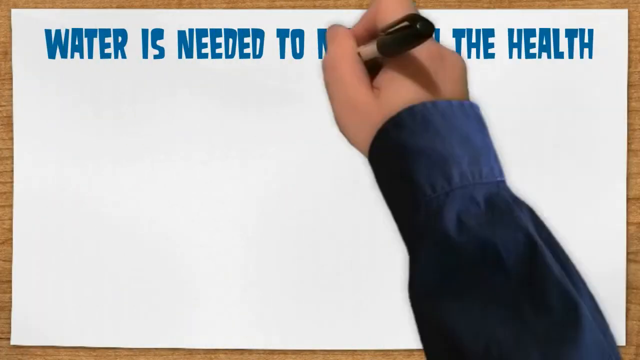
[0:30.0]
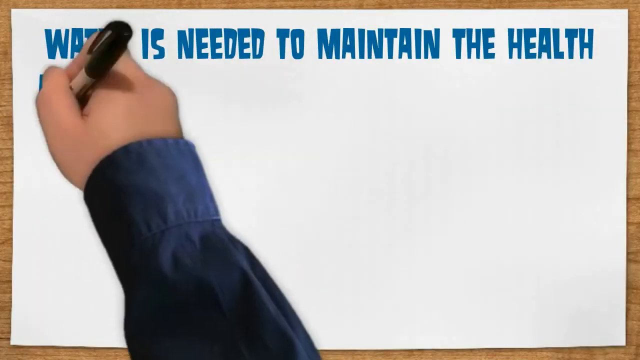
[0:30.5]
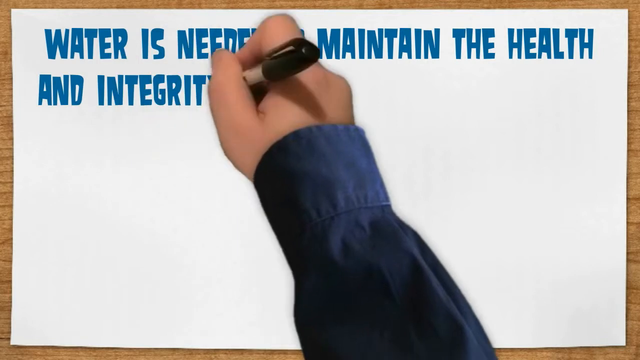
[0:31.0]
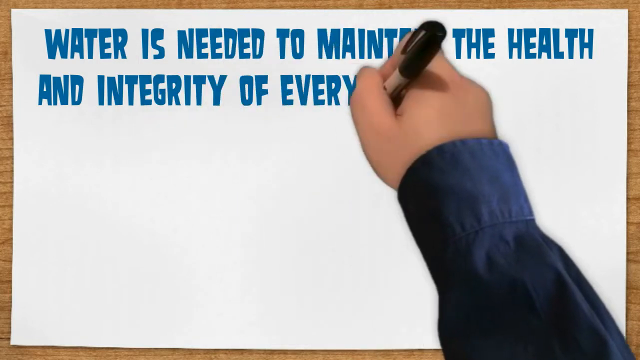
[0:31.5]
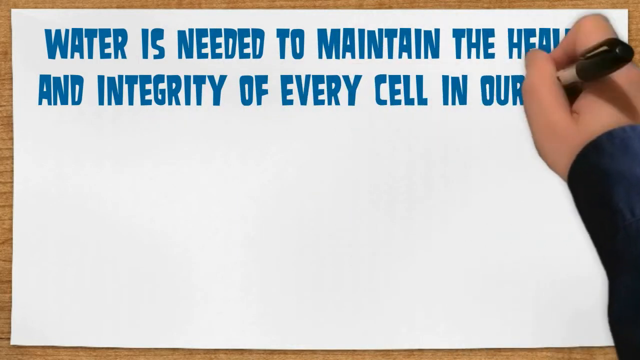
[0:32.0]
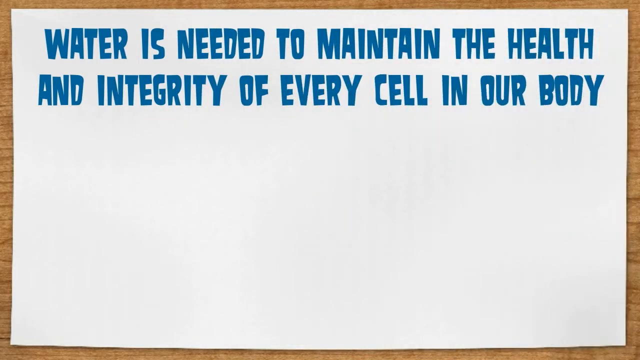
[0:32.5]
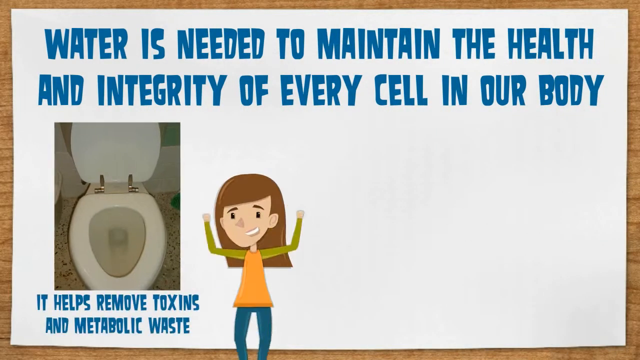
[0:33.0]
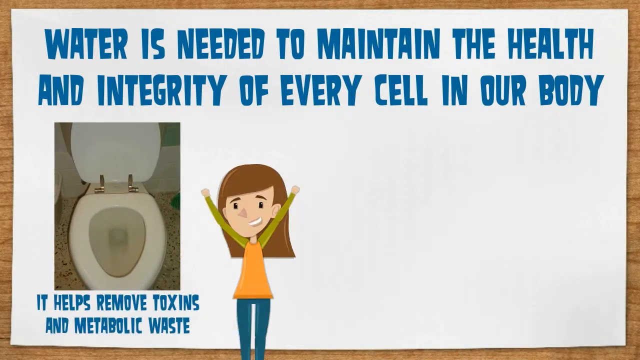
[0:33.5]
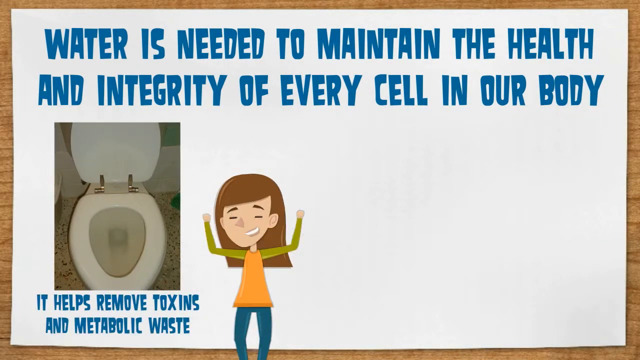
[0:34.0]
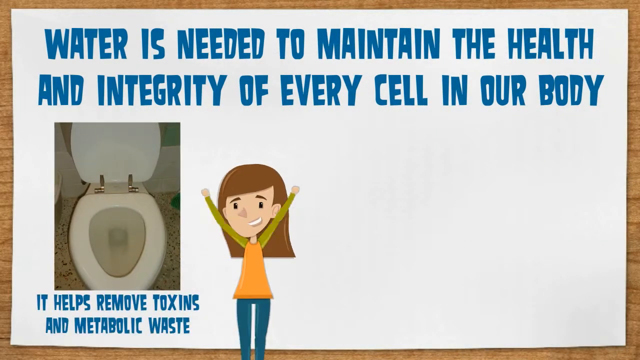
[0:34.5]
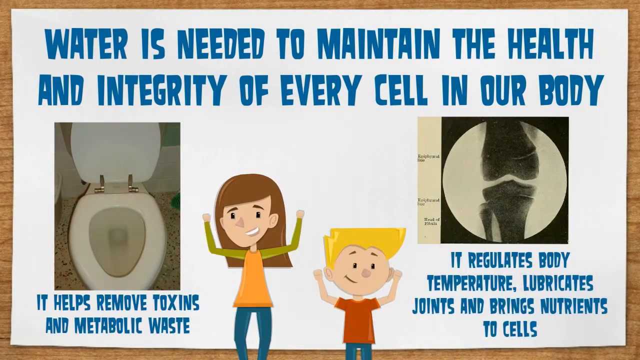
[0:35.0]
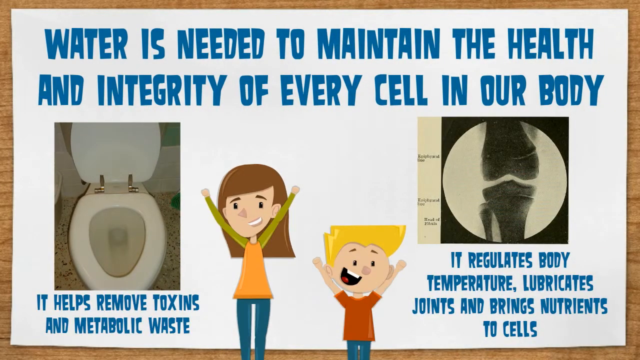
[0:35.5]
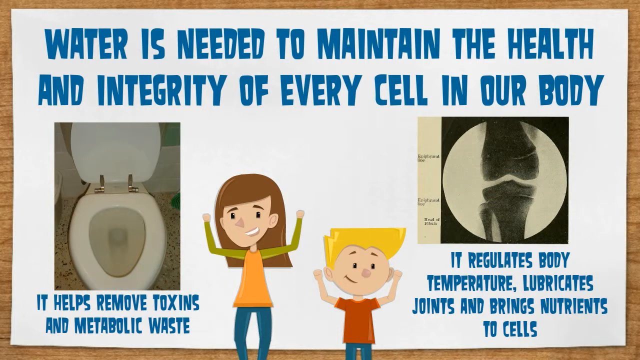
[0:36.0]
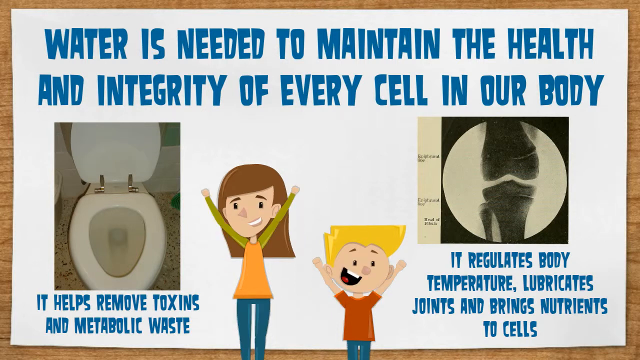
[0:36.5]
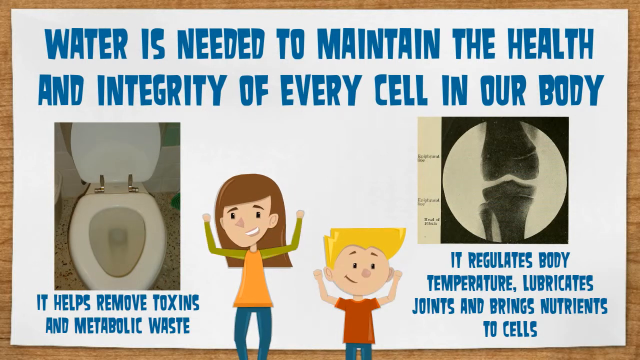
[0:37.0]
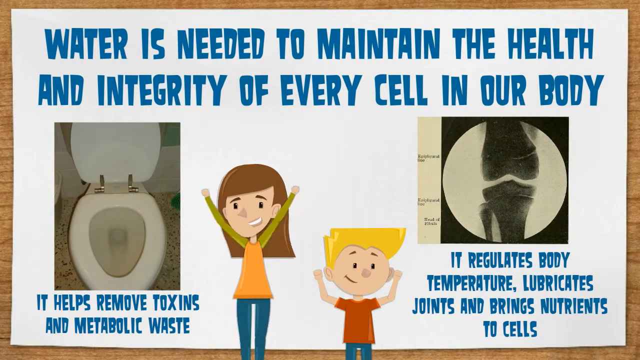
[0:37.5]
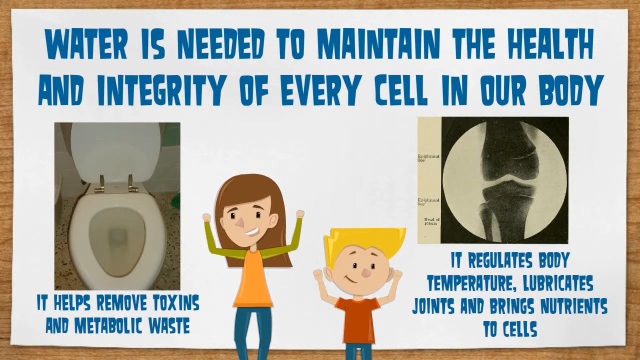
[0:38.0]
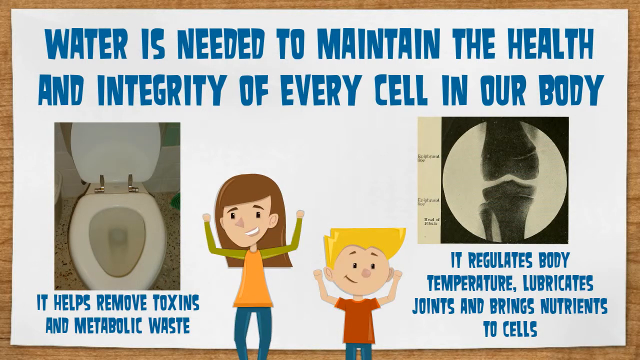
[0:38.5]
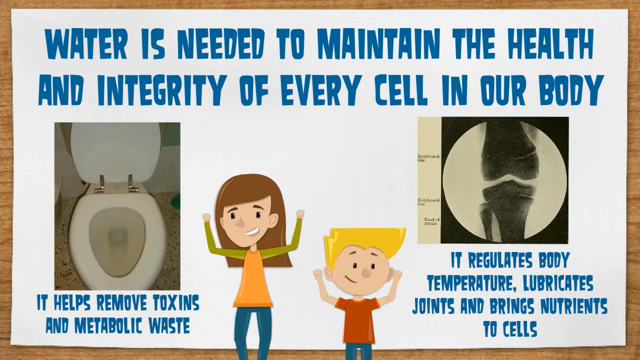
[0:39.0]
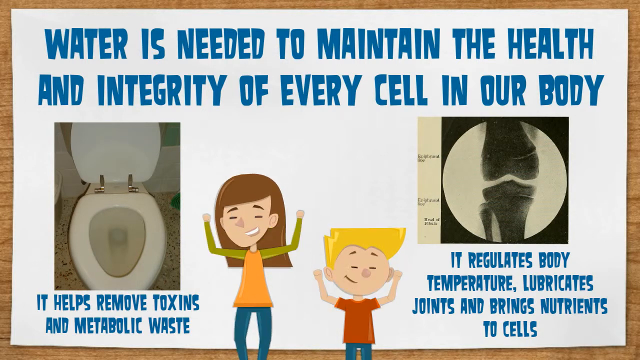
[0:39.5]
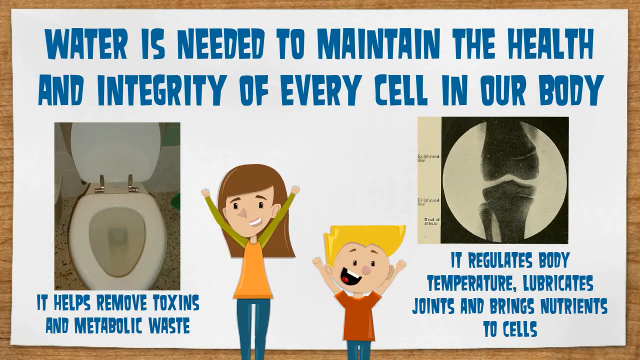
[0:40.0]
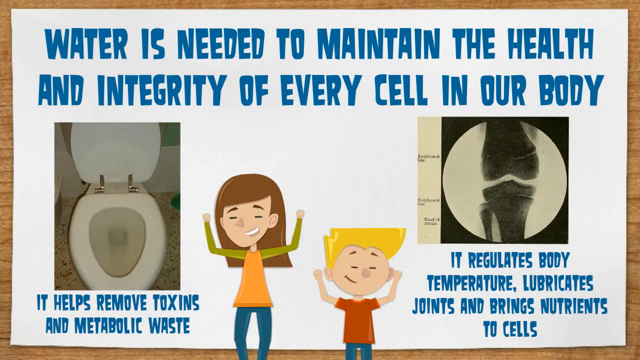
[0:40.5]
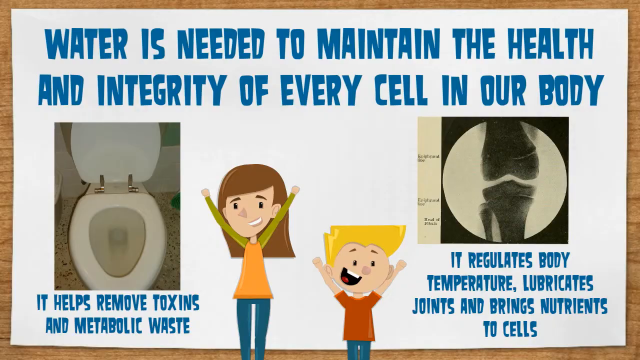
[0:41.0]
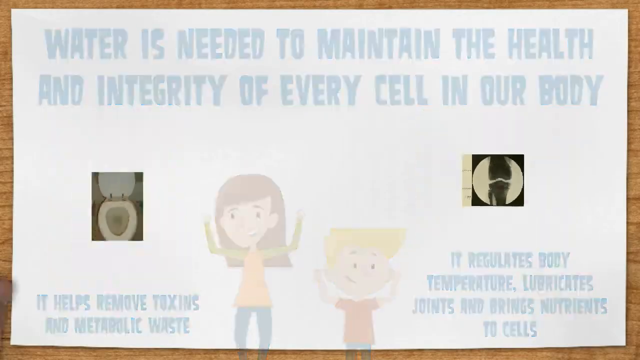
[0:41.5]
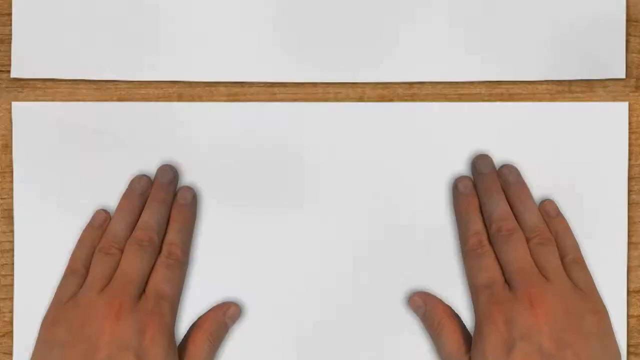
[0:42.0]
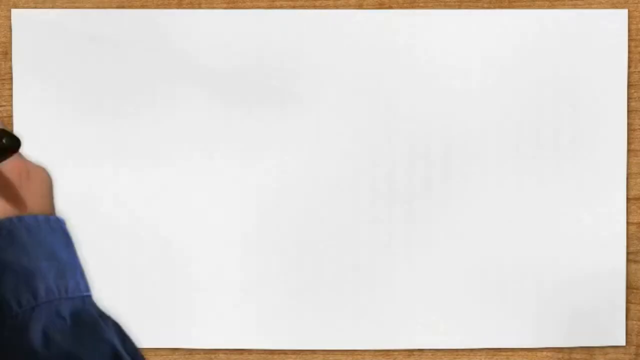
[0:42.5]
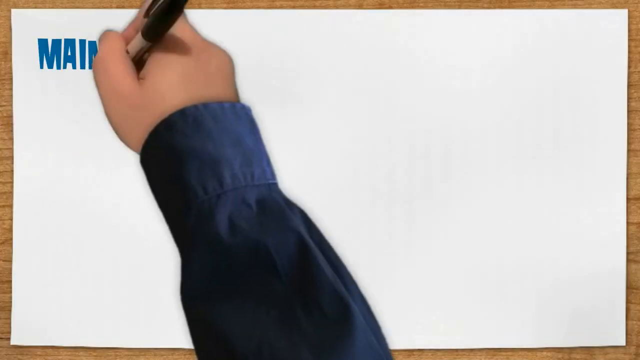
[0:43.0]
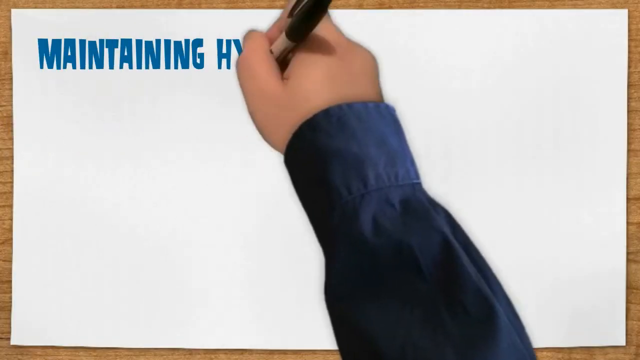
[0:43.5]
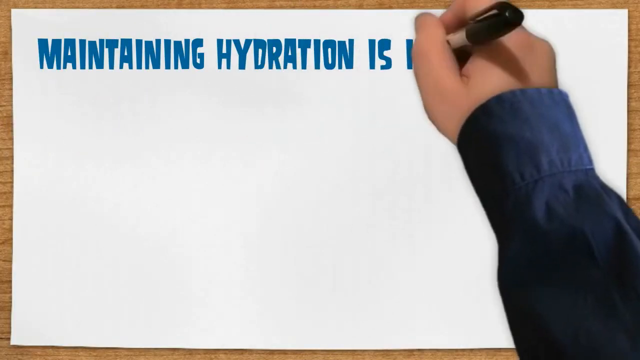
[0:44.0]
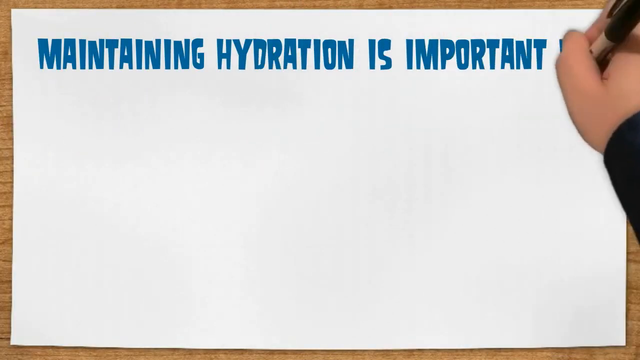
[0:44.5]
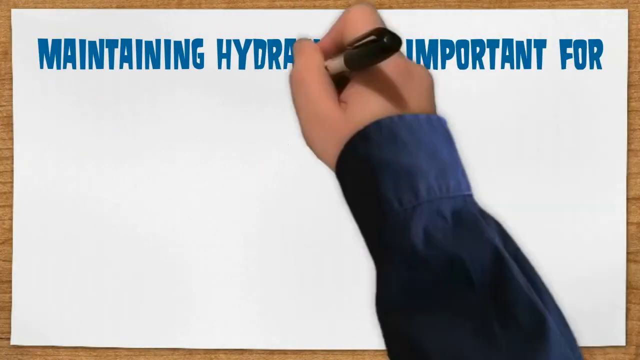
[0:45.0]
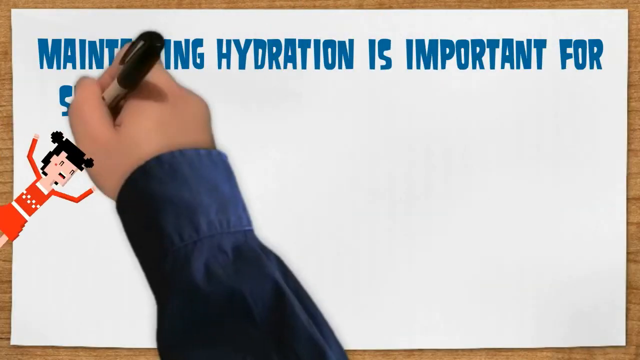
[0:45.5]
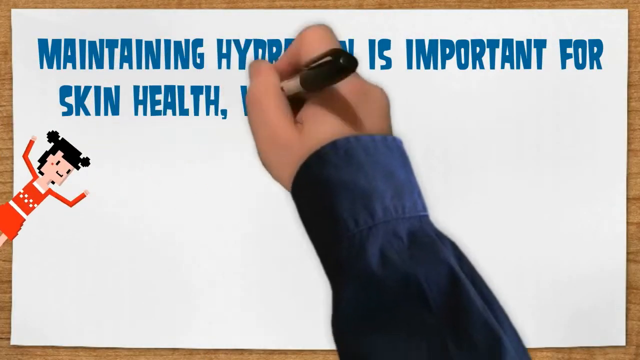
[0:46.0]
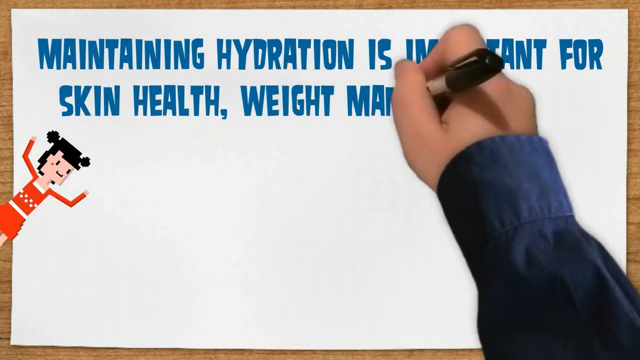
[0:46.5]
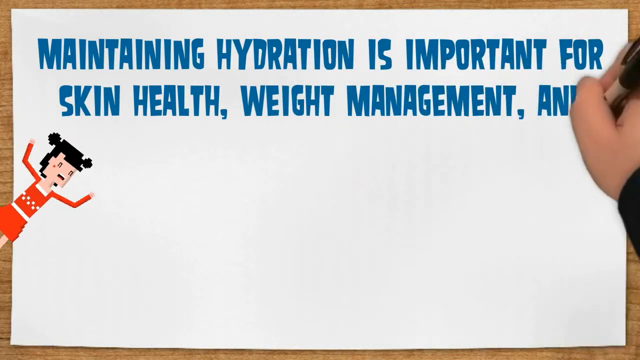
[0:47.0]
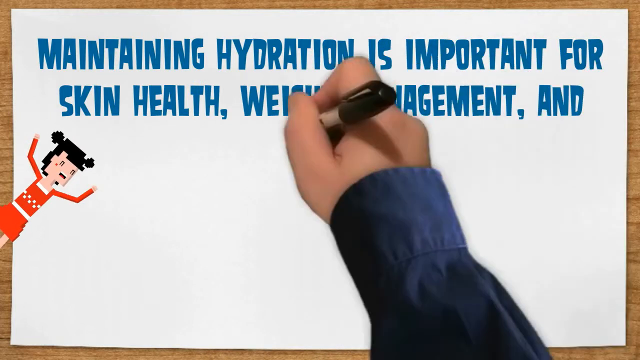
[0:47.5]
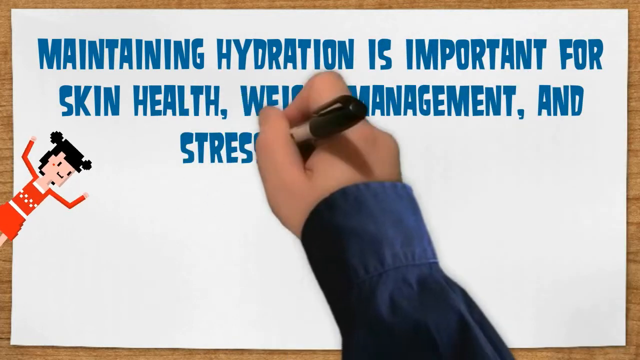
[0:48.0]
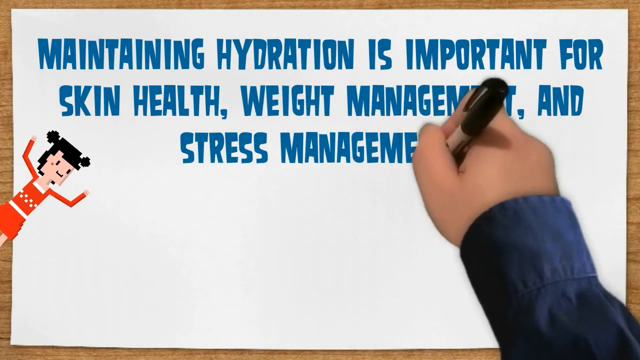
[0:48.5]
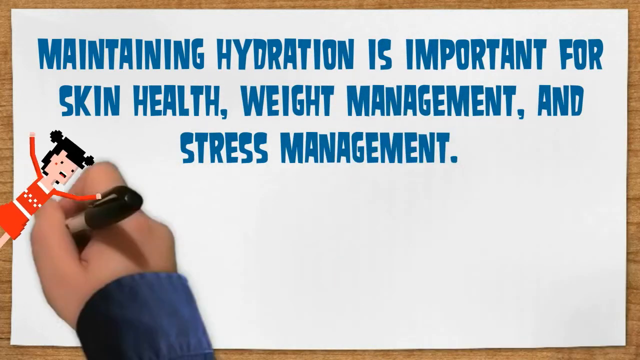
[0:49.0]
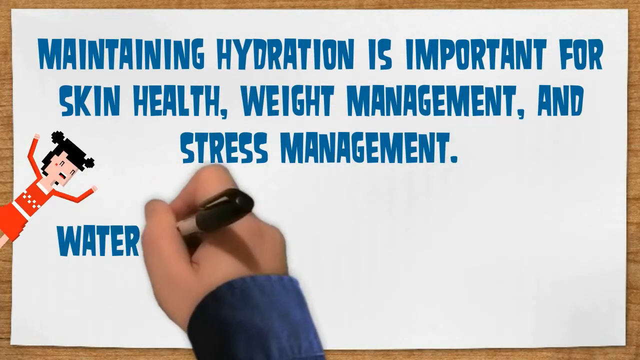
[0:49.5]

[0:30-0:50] The hand appears to write text reading "water is needed to maintain health and integrity of every cell in our body." A picture of a toilet appears on the left, and beneath it the text "it helps remove toxins and metabolic waste" appears. A cartoon woman with brown hair, an orange top and blue jeans has her arms up in the air as if in celebration, then begins jumping up and down, her knees bending and her arms moving up and down with the knee bends. On the right of the paper an image of an X-ray of a joint appears. A young boy cartoon, shorter than the girl, with yellow hair and a red top, does the same jumping motion. The girl looks toward the left side of the screen and the boy toward the right. Under the X-ray, text reads "it regulates body temperature, lubricates joints and brings nutrients to cells." The characters keep jumping up and down. The text gets larger before disappearing. The hands in the shirt appear and seem to switch to a new piece of paper. The hand is again made to look as if it is writing, with the text appearing as it writes. On the left side, an eight-bit image of a girl with black hair in pigtails, a red top and a red skirt moves her arms up and down in celebration.